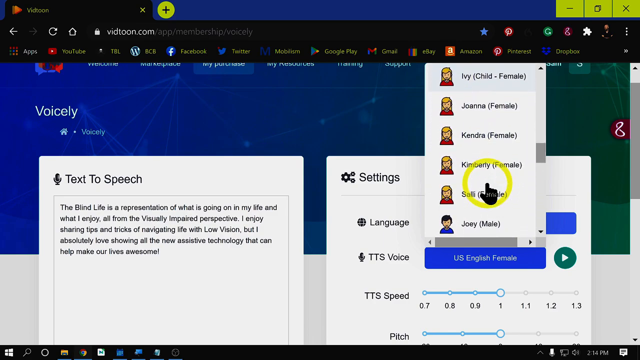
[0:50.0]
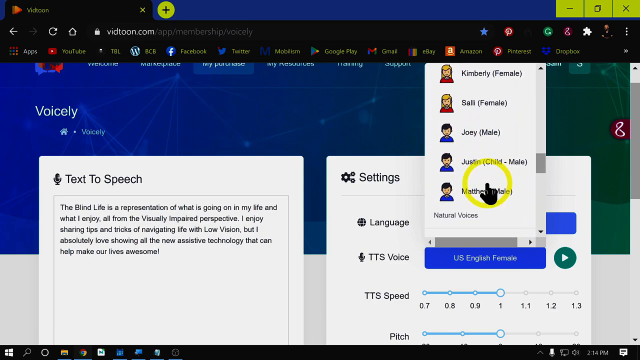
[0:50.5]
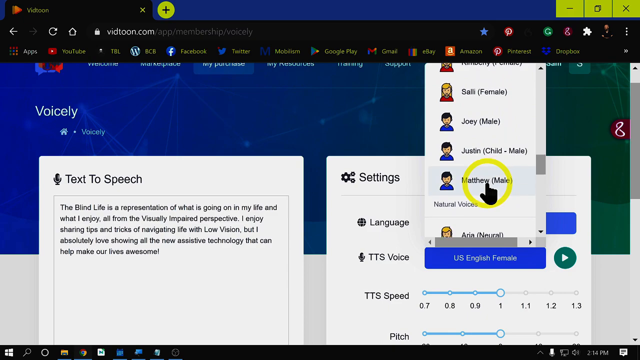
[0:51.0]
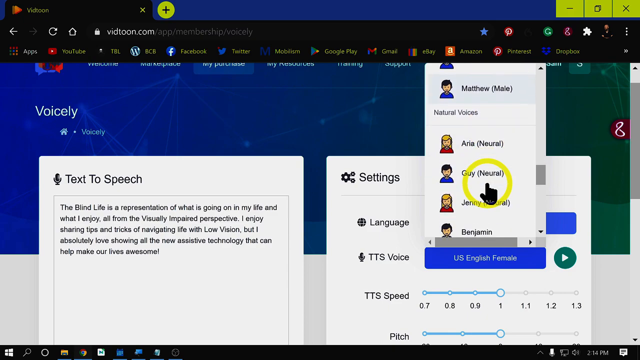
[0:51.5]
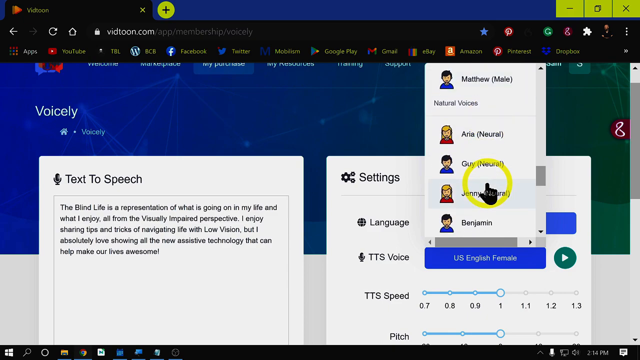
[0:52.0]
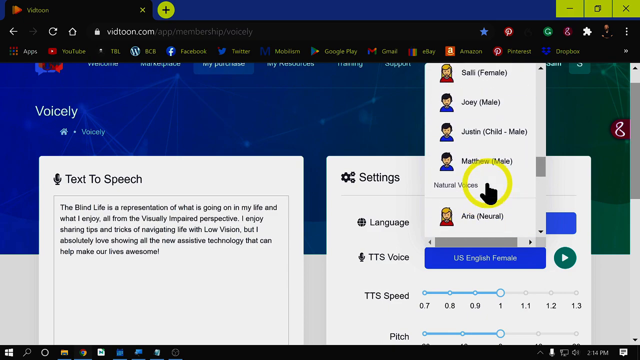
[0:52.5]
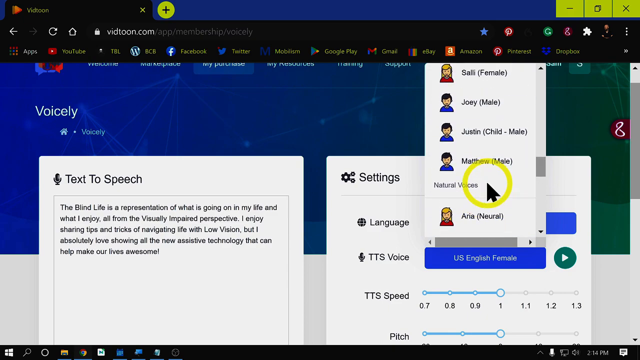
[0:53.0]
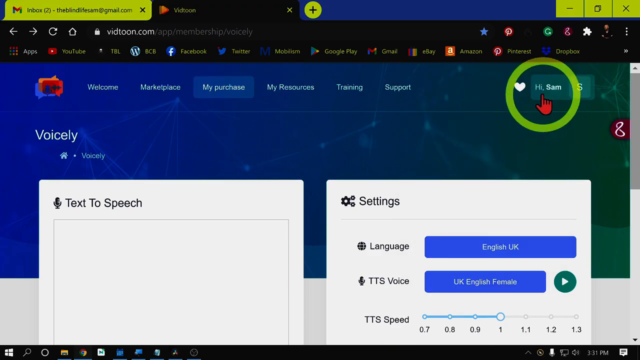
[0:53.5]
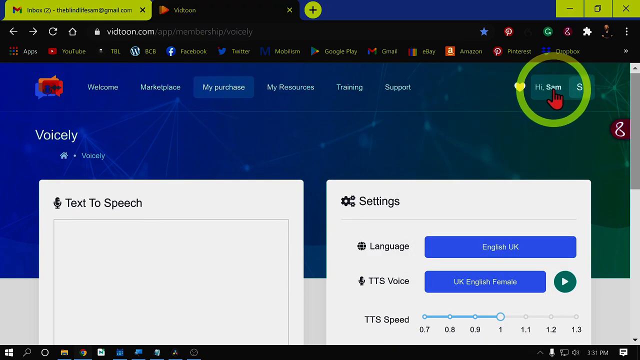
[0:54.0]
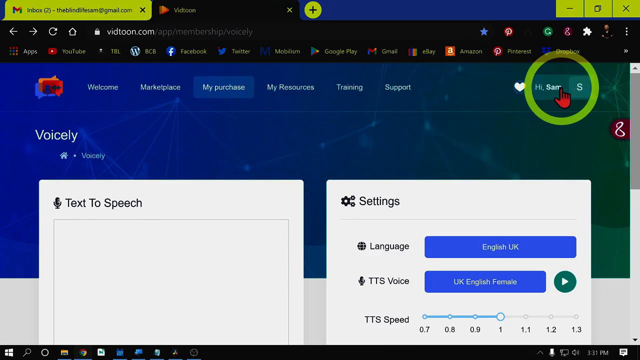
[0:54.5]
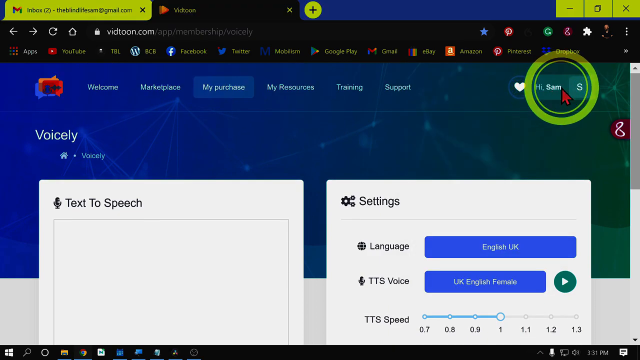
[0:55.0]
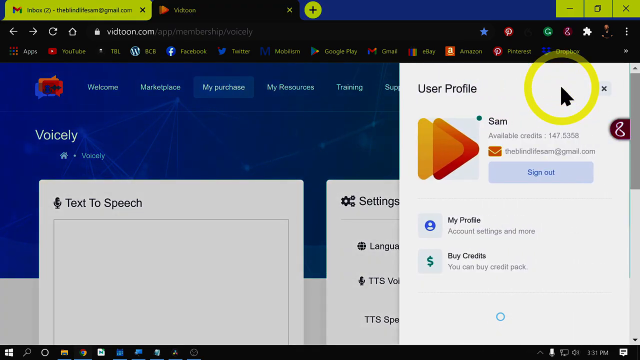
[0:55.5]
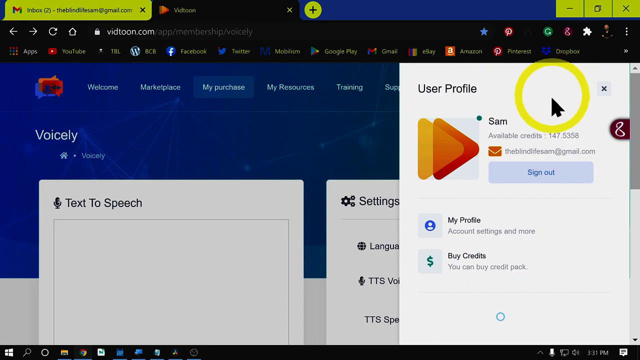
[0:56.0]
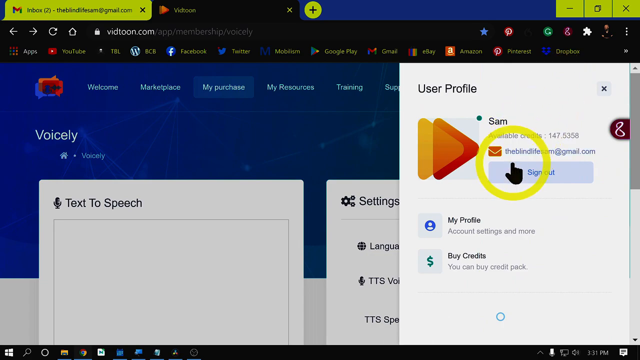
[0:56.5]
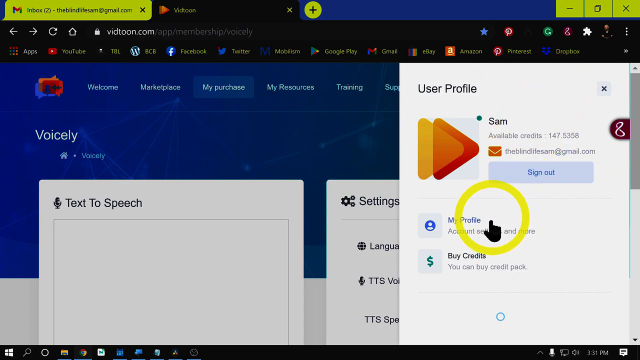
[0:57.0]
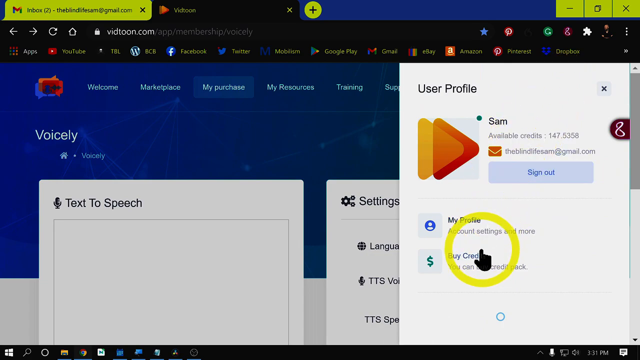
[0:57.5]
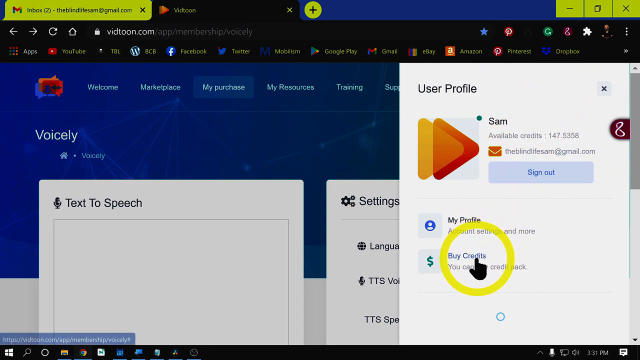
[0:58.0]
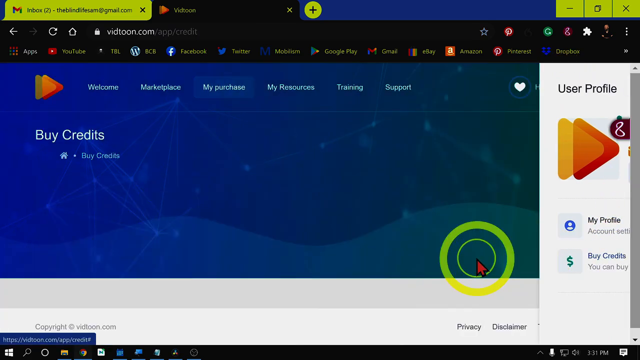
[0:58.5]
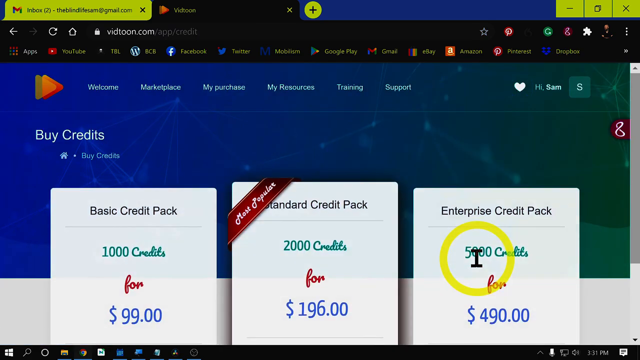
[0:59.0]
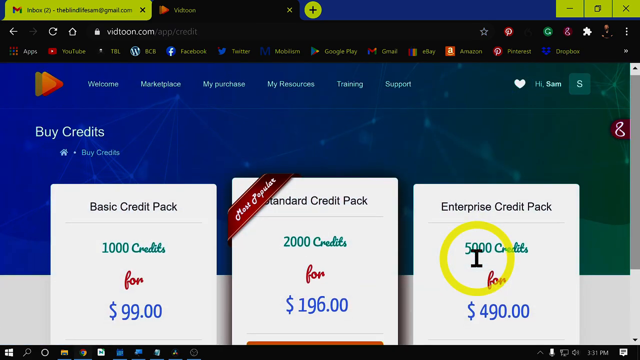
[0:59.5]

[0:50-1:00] The user continues scrolling down the list of names, begins to scroll back up, and then clicks off the menu. The cursor, a red hand inside a large yellowy-green circle, hovers over the area of the screen that says "Hi Sam". Clicking it opens a user profile showing that Sam has available credits, with options to view the profile or buy more credits. The cursor moves around the screen and selects the buy credits option, which opens a new menu.